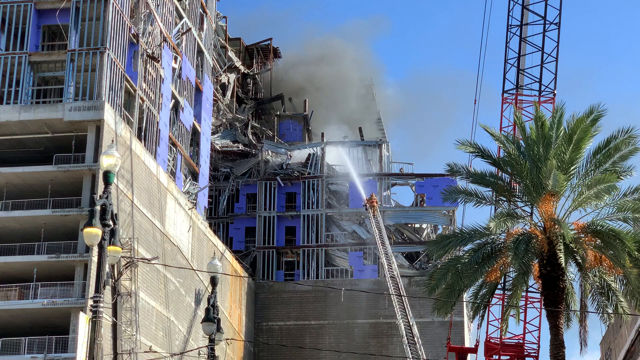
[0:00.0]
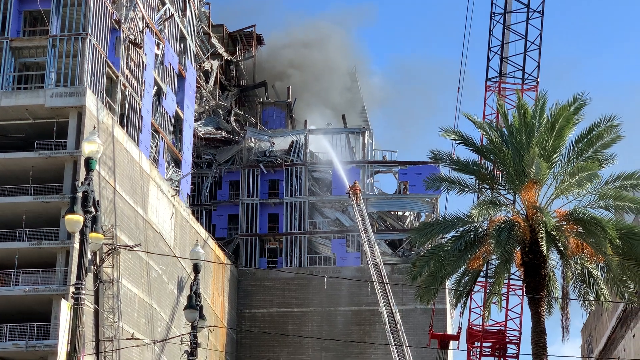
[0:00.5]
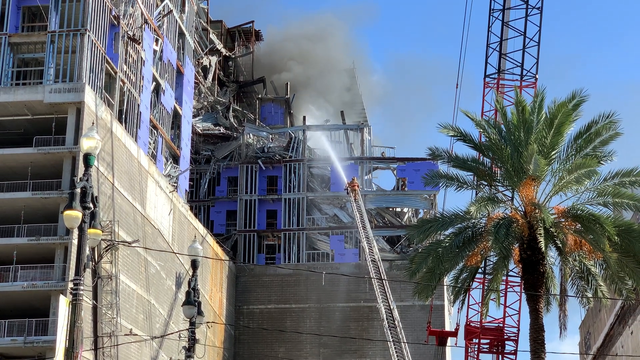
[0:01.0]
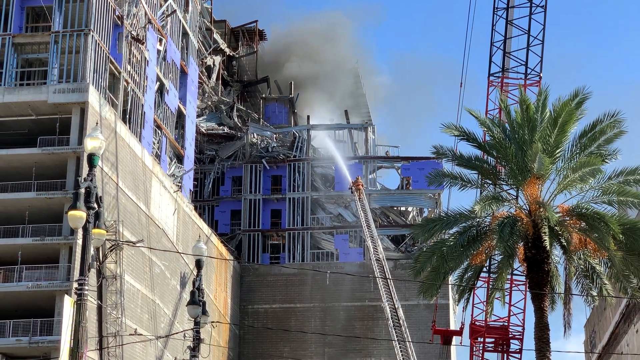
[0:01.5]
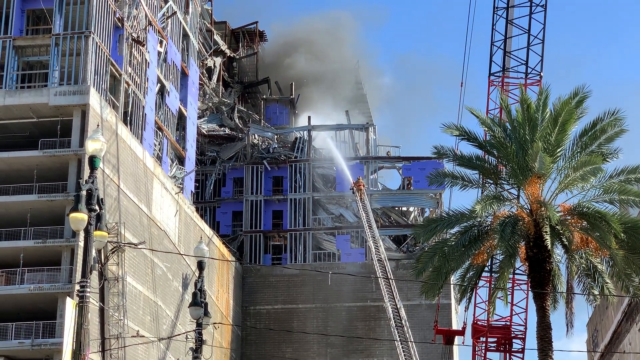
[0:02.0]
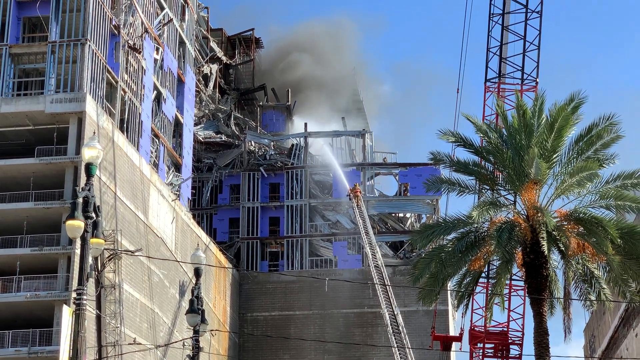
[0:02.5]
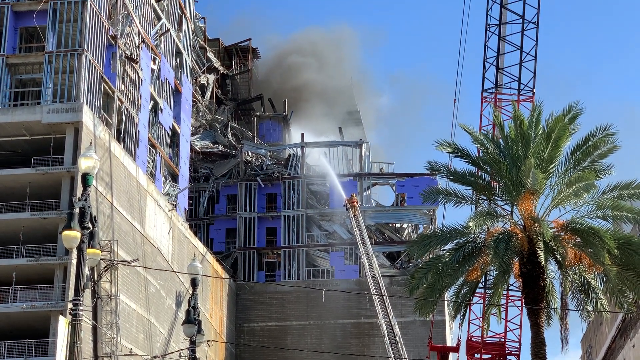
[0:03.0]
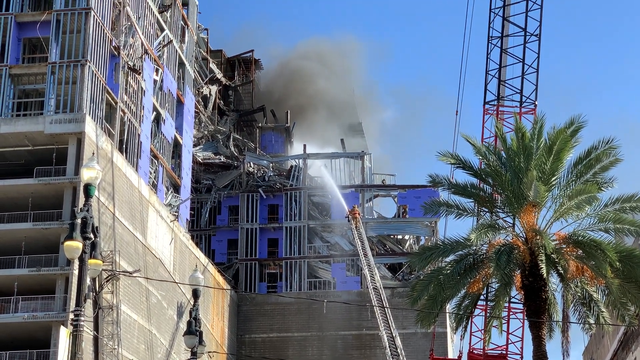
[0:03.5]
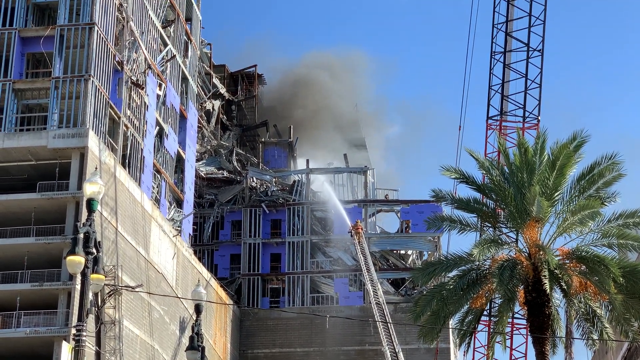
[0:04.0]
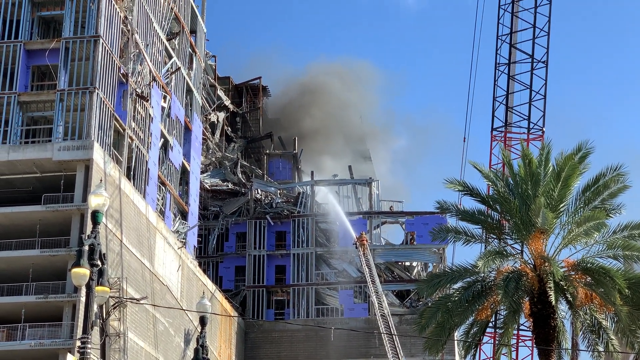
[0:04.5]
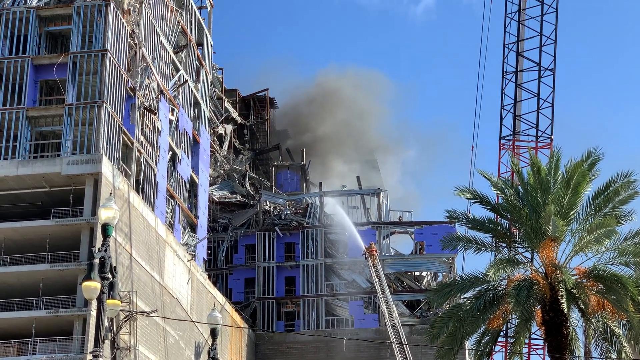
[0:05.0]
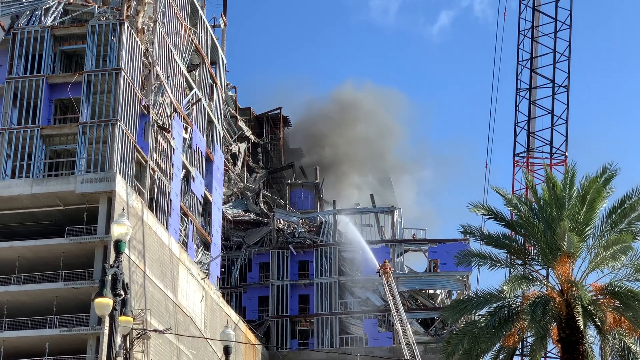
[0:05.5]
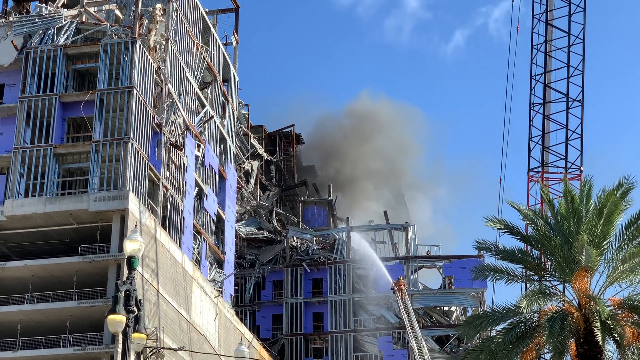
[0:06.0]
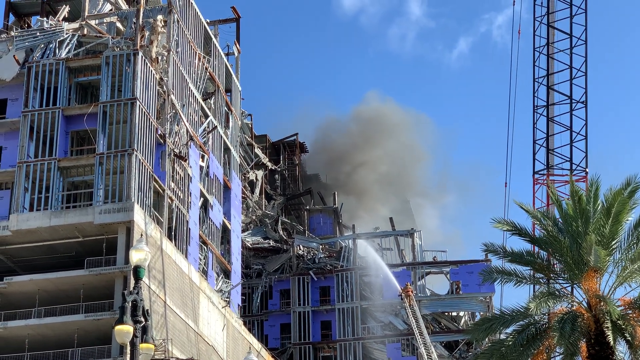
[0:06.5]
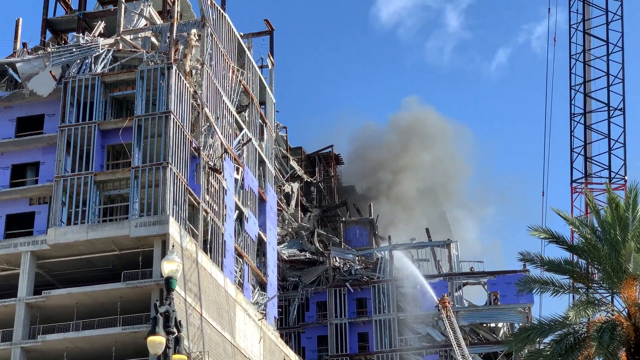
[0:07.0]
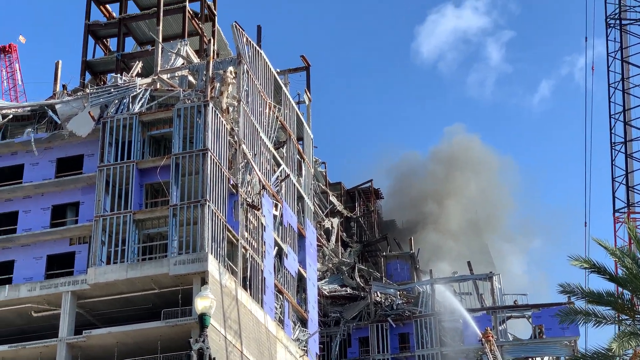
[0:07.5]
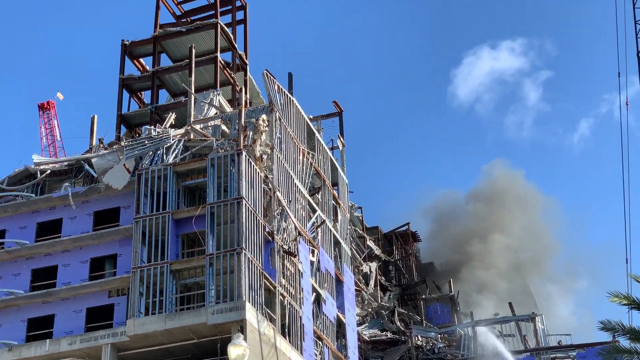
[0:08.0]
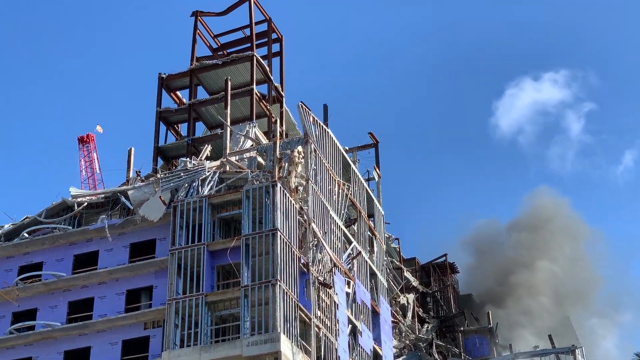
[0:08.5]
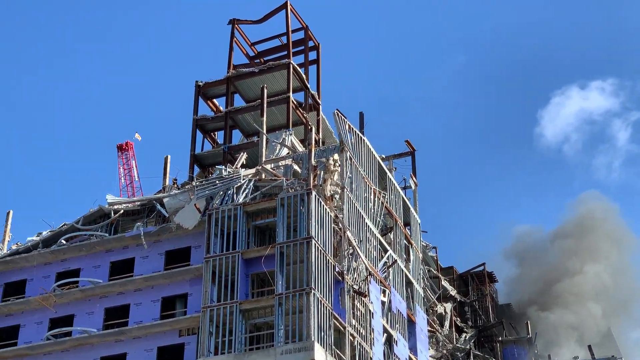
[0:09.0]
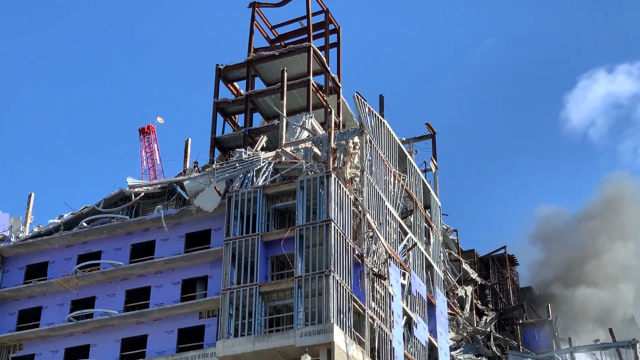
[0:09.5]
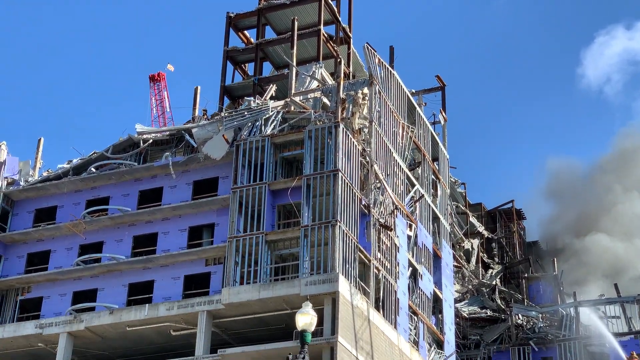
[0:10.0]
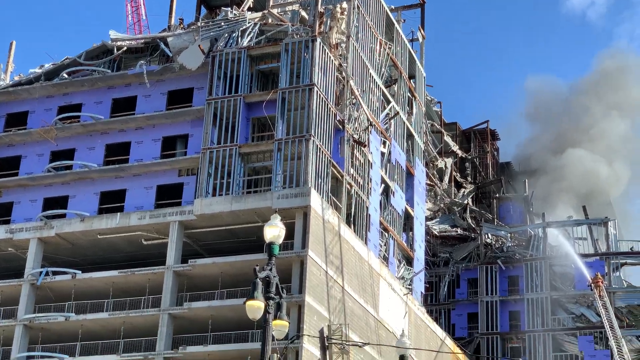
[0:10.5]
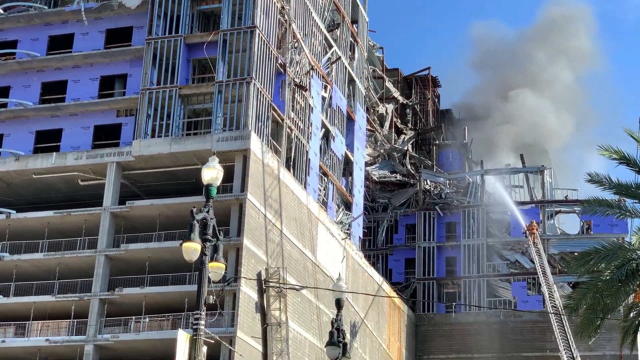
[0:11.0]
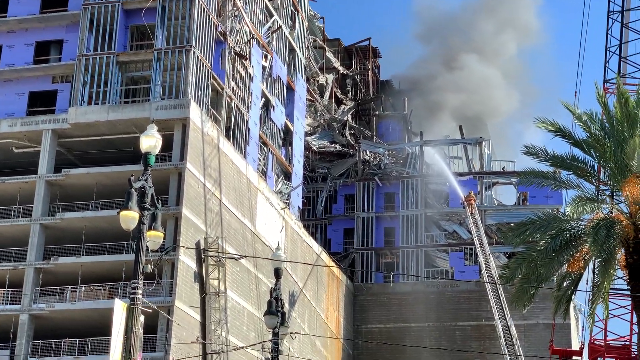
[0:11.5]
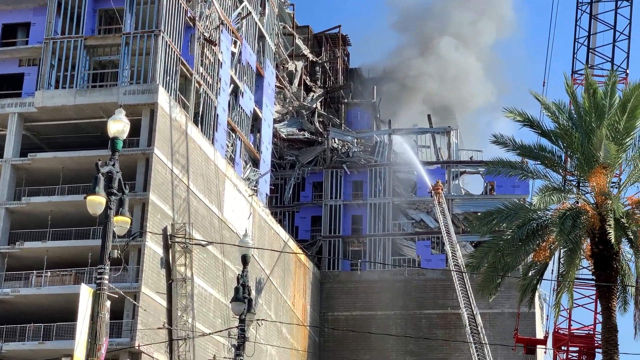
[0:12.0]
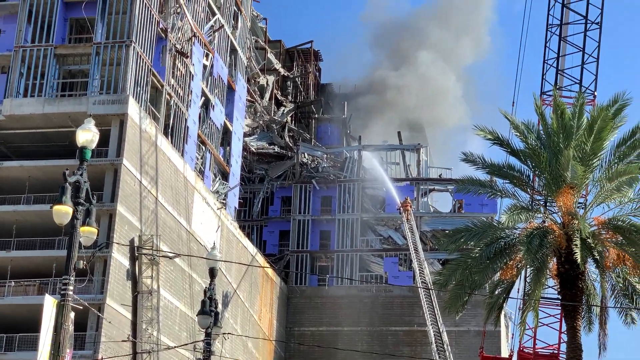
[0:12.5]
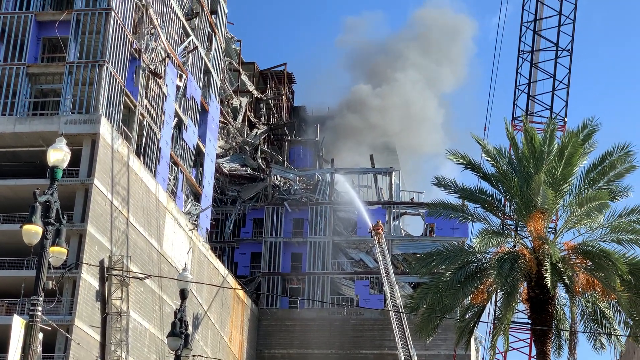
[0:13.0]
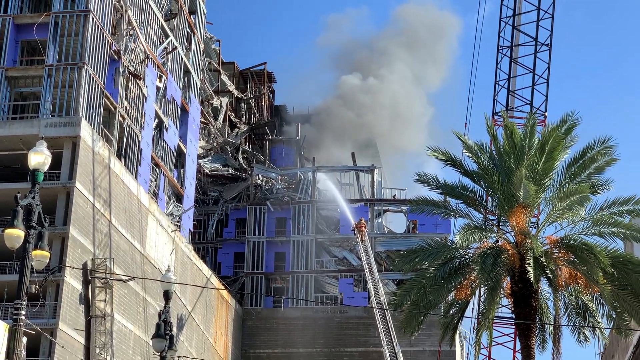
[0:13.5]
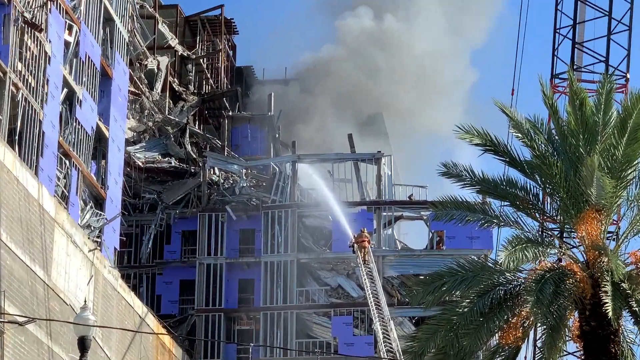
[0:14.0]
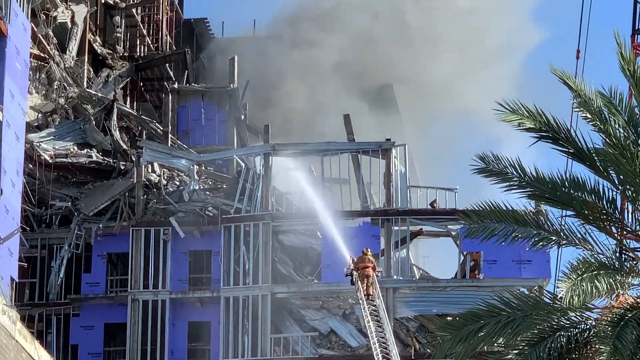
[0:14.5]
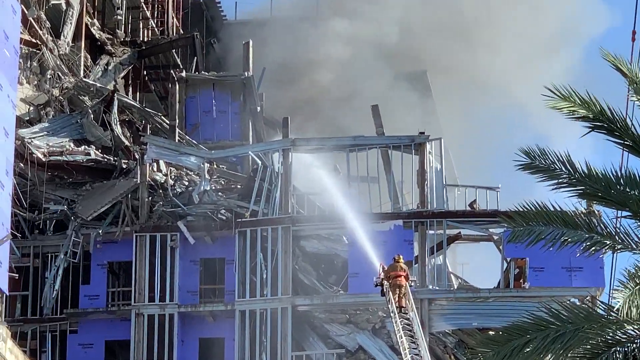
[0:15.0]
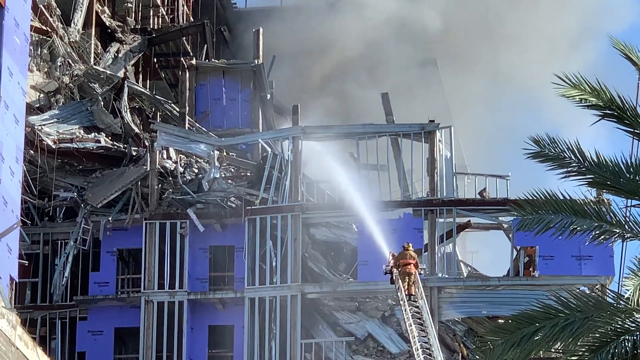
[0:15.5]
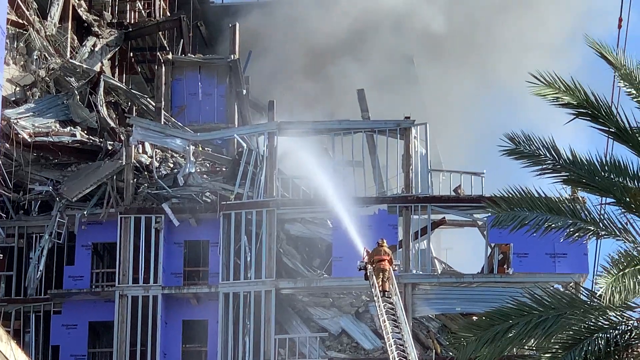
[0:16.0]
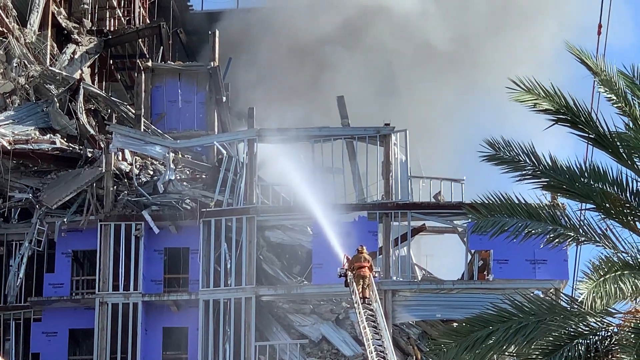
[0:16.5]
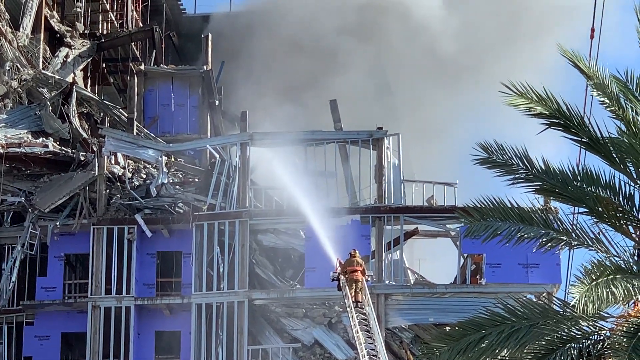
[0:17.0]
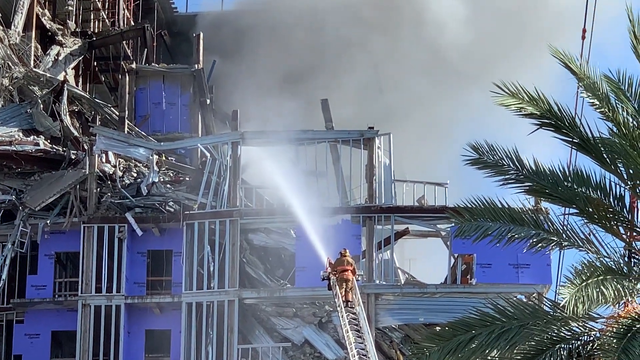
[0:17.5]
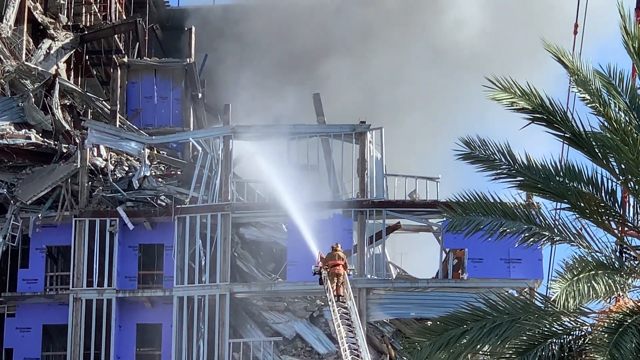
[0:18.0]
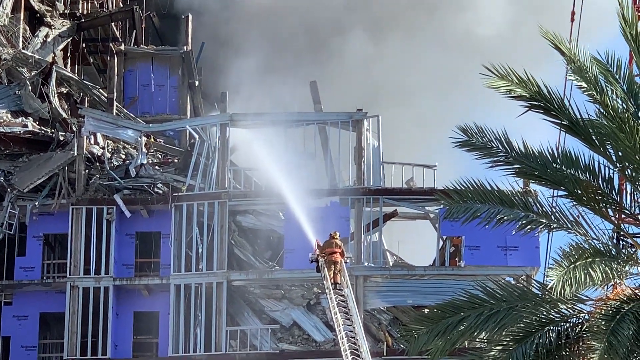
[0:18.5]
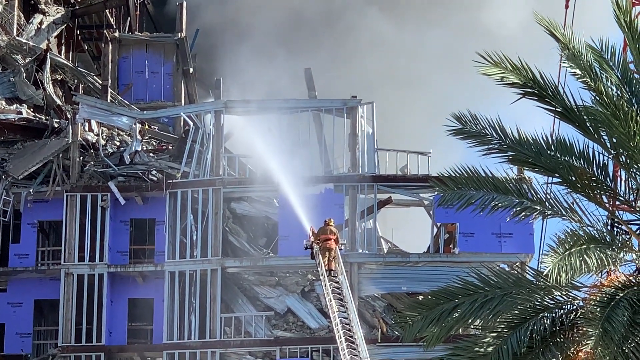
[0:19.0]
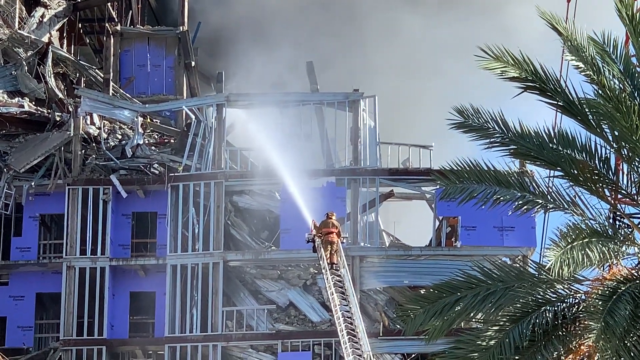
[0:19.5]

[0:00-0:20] A firefighter is on an aerial ladder, a very long ladder somewhat like a tower, positioned to the right side, far away in the background. The firefighter is alone on top of the ladder, holding a hose with a lot of water coming out of it, putting out a fire burning inside a very large building. A large building to the left is severely damaged and looks like it has been hit by a missile or a rocket. Two areas are damaged: a very damaged area to the left, and an area to the right where the firefighter is trying to put out the fire. The view shifts to the left to show the damaged building on the left side, whose side is very shattered, as if hit by something. The view then shifts to the right, where the head of a palm tree is visible in the bottom right corner. The view zooms in on the firefighter using the hose with gushing water to put out the fire burning in the building.